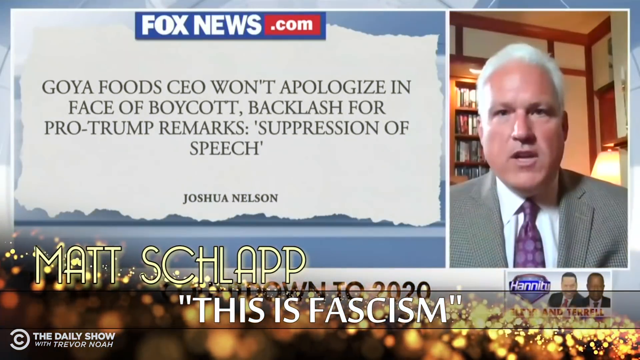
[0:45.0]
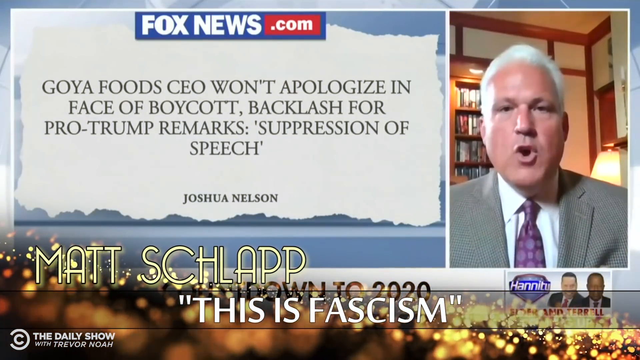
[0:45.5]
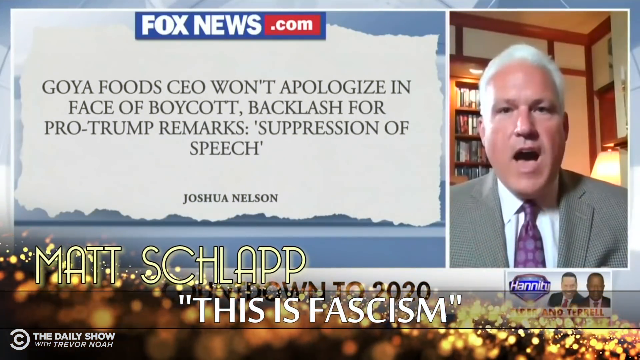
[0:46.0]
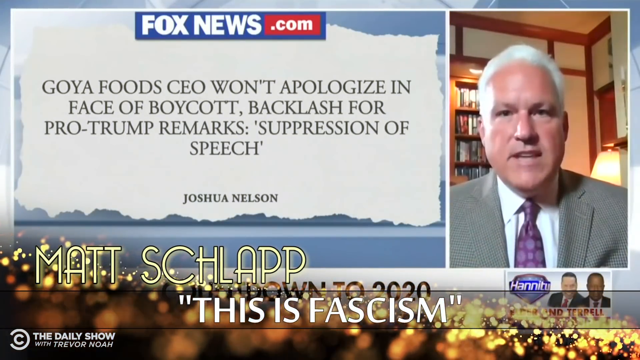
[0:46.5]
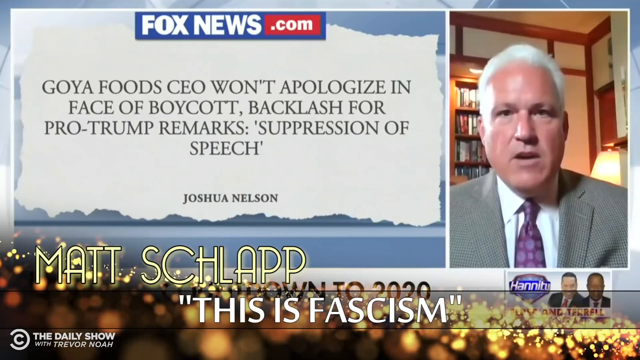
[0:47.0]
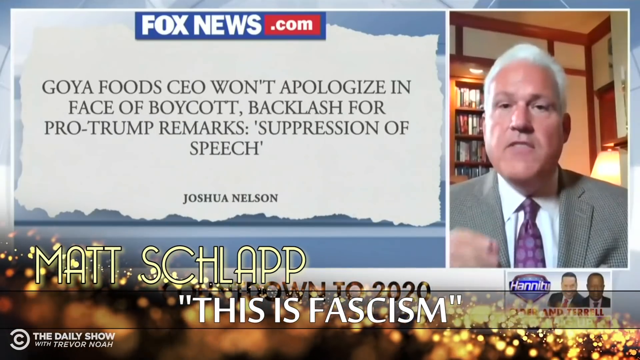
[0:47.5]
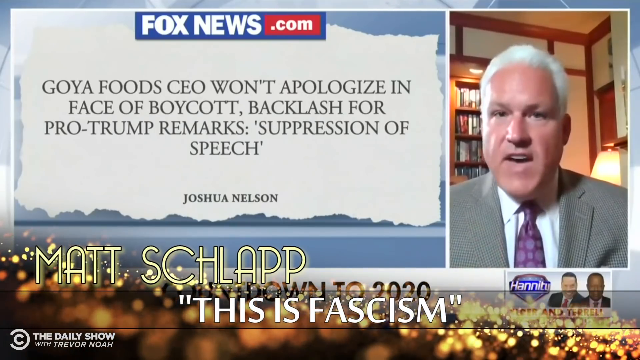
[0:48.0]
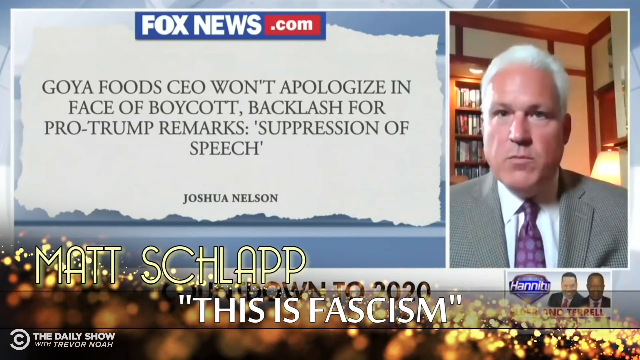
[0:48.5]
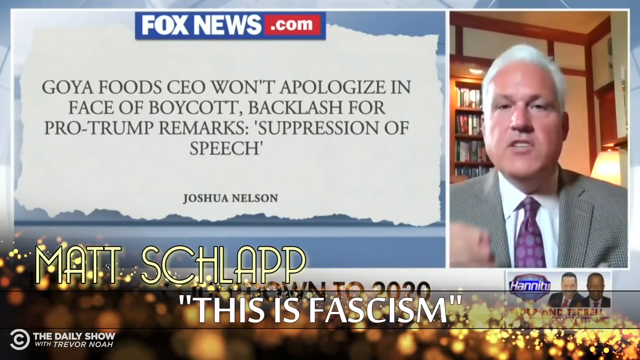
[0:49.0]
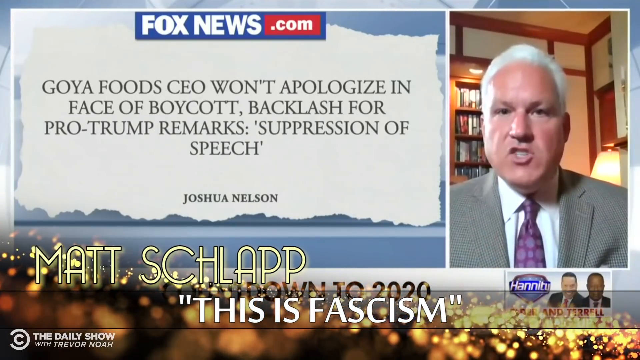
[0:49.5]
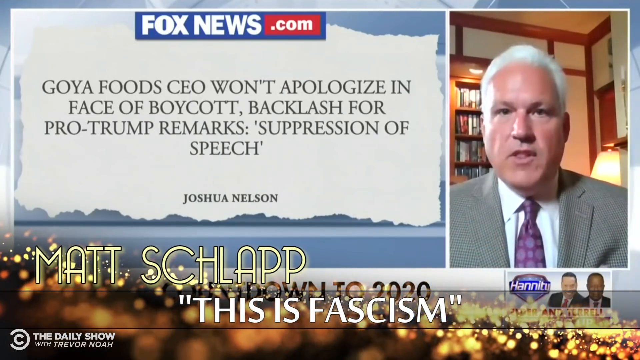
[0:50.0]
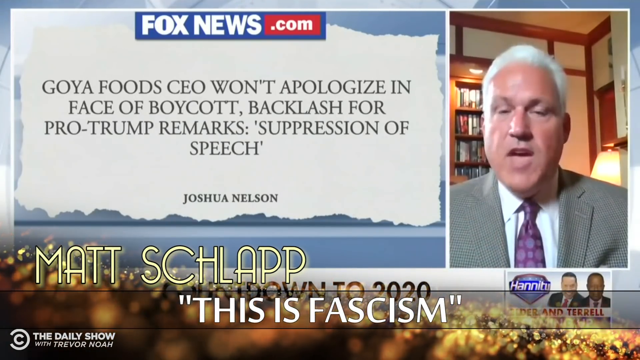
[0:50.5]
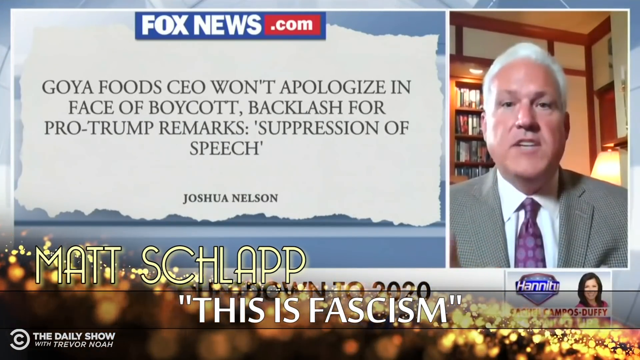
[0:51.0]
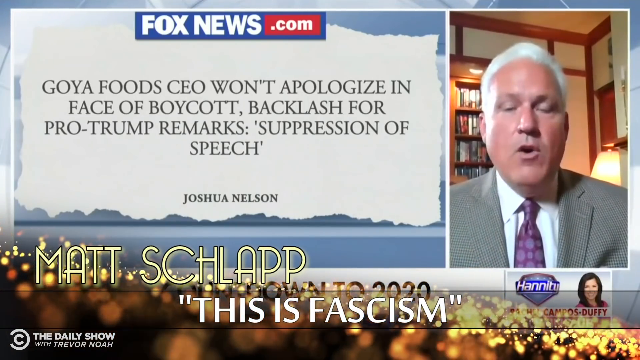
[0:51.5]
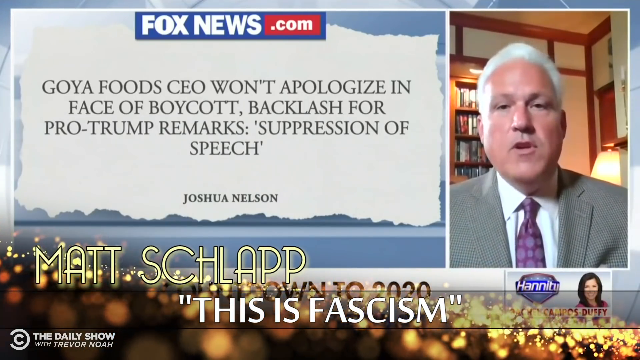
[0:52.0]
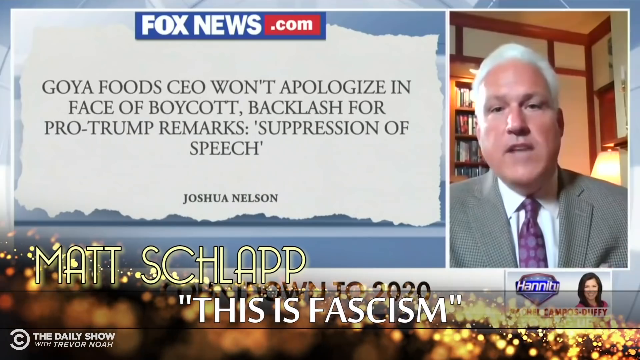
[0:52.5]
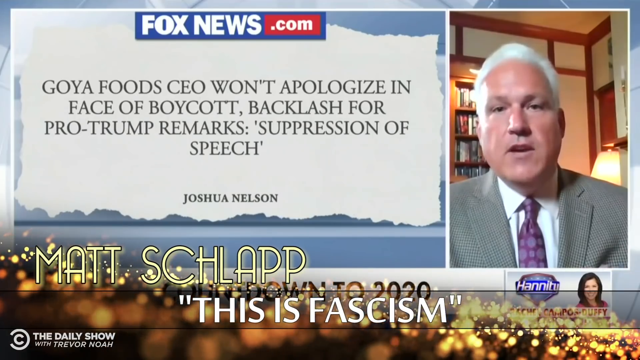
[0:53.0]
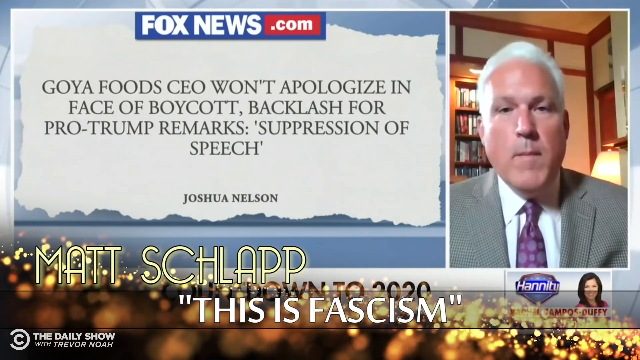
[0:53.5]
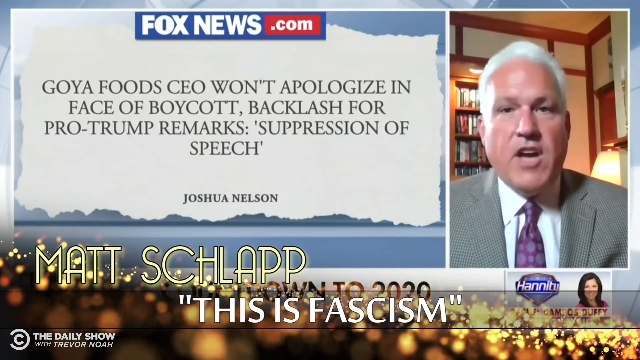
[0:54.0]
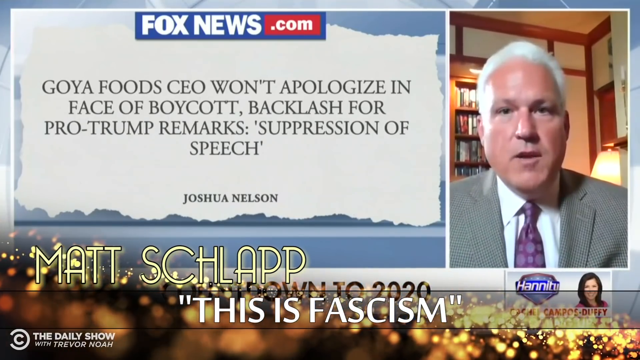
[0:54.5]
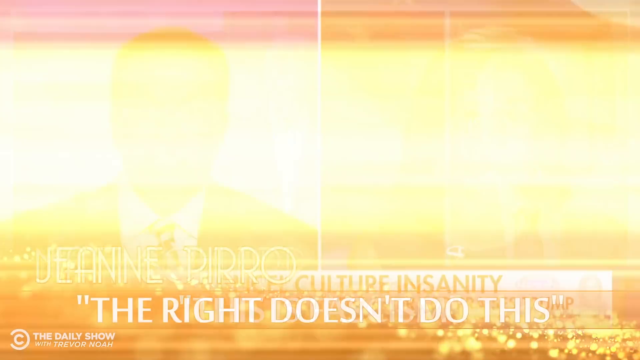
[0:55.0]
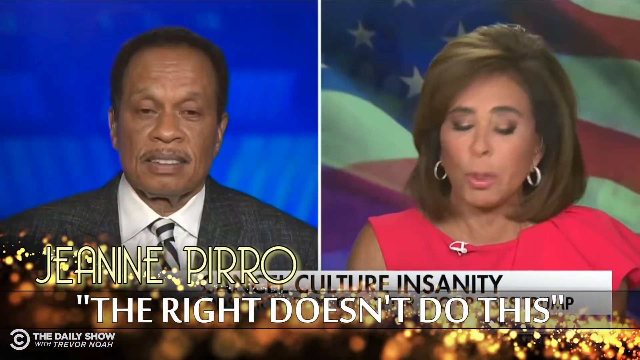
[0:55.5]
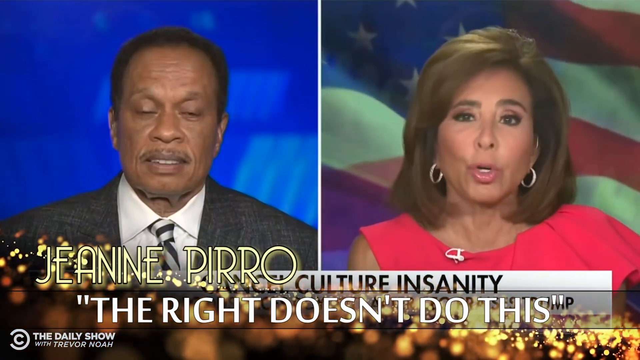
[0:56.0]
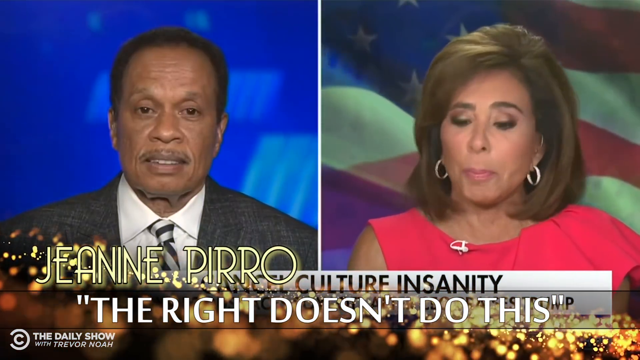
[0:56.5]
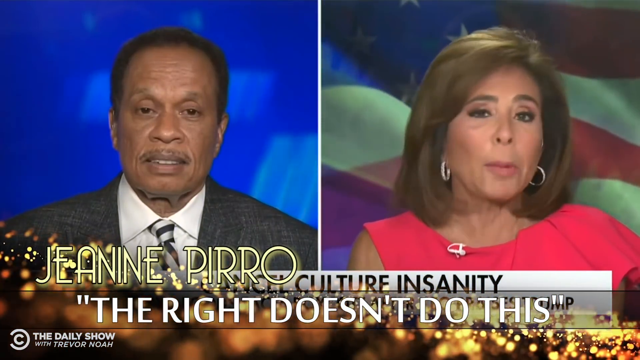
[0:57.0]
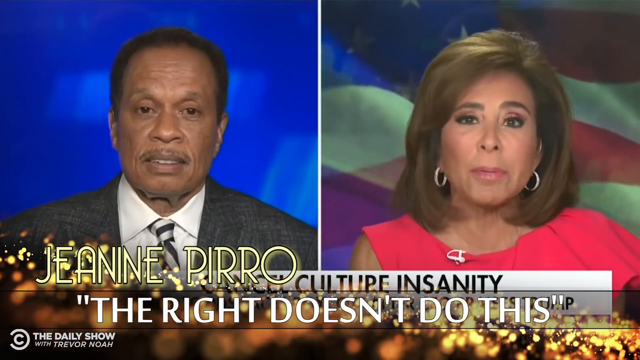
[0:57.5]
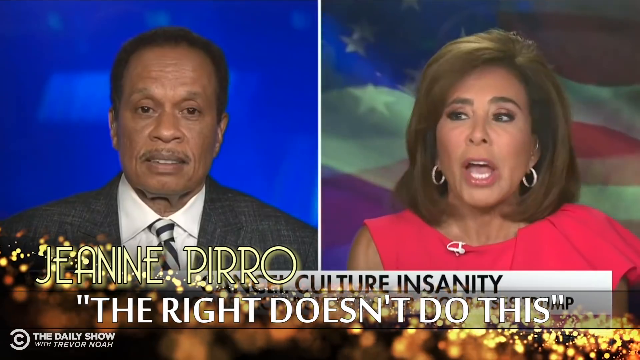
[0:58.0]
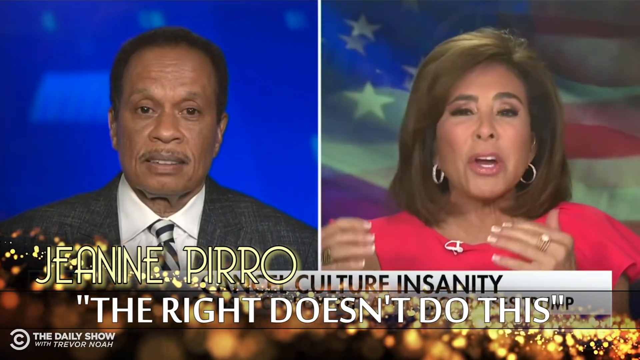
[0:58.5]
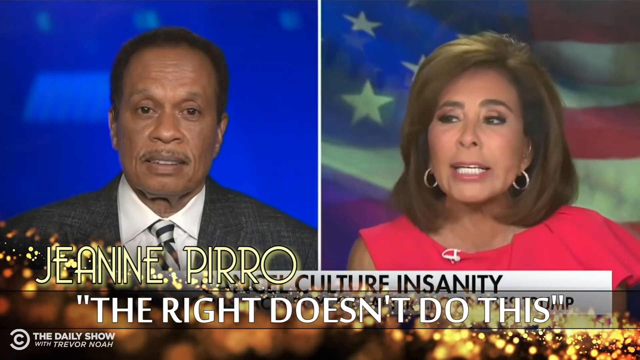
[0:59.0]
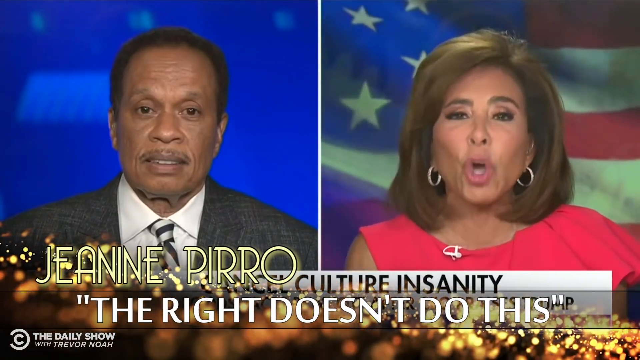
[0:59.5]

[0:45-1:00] The Daily Show's comedy bit, the 64th Annual Outragees, presents nominees for the fake award. The next nominee is Matt Schlapp, with the text below him reading "this is fascism" in quotes. Schlapp is on the right speaking, apparently in an interview on Hannity on Fox News. On the left is text reading "Goya Foods CEO won't apologize in face of boycott, backlash for pro-Trump remarks, suppression of speech," along with Joshua Nelson, apparently the CEO in question. A screen transition leads to the next nominee, Jeanine Pirro, with the quote "the right doesn't do this" below her. She is on Fox News on the right side of the screen, speaking, with a second guest on the left.